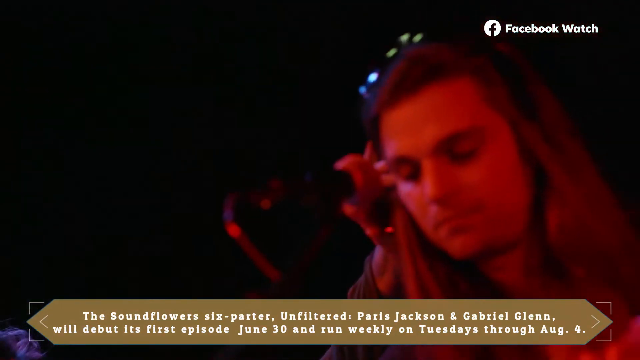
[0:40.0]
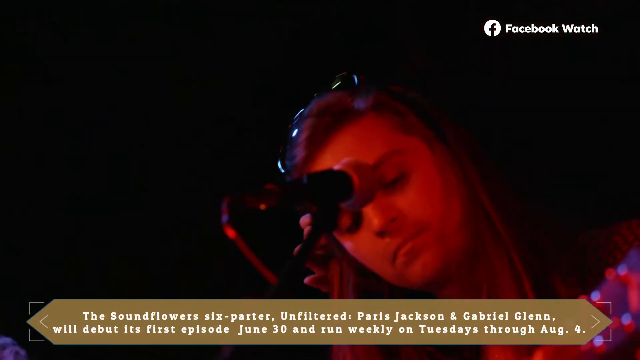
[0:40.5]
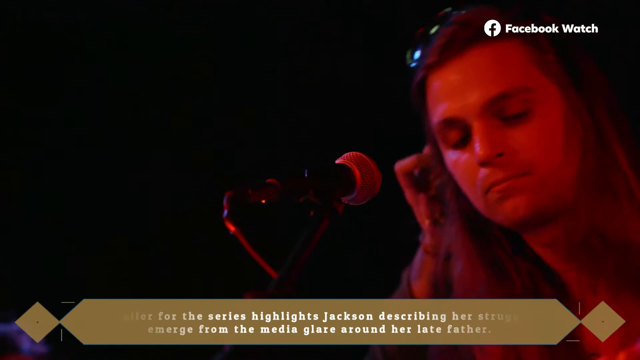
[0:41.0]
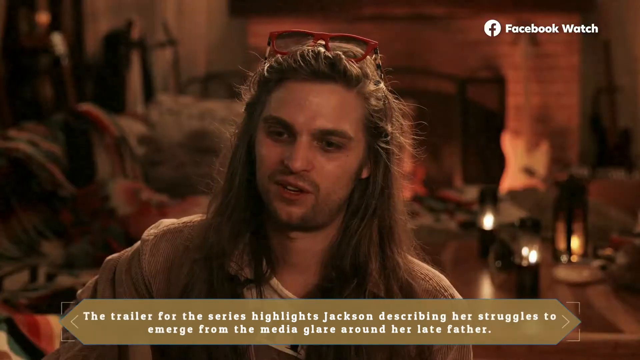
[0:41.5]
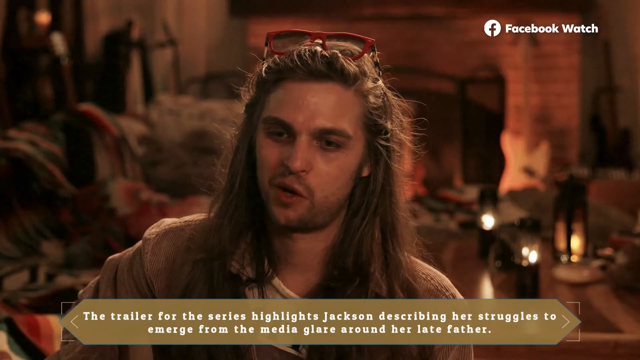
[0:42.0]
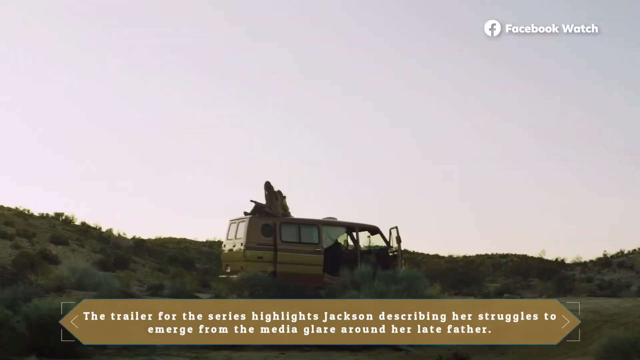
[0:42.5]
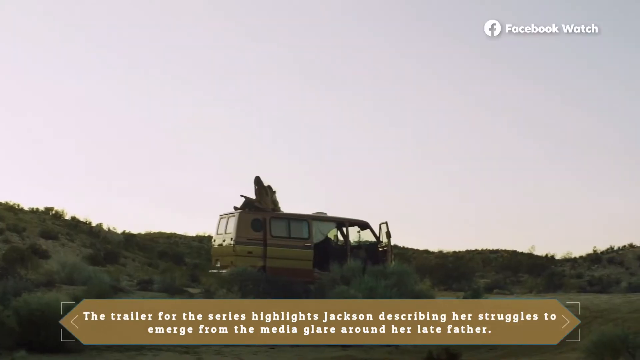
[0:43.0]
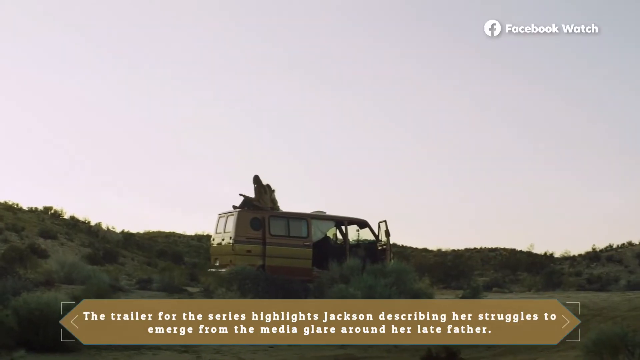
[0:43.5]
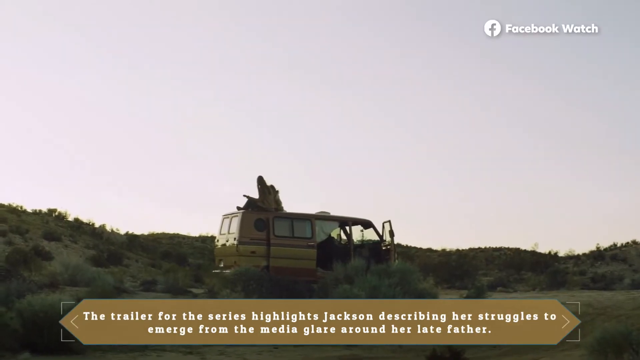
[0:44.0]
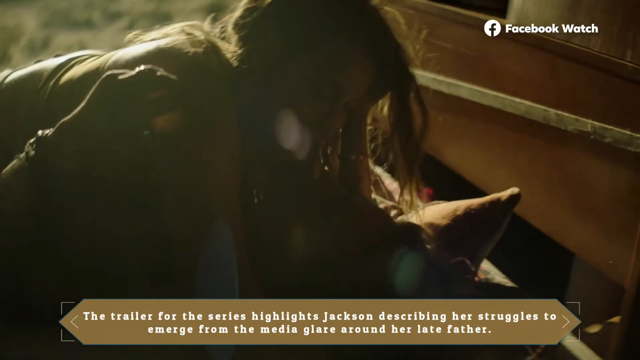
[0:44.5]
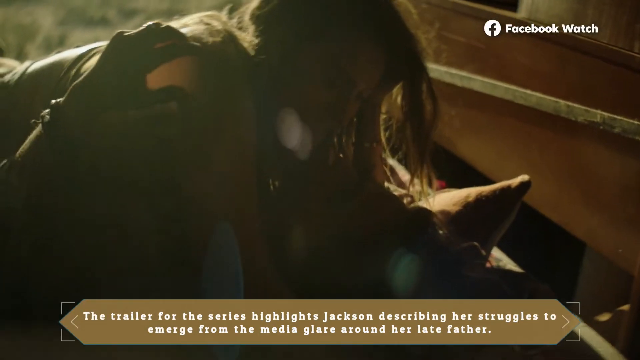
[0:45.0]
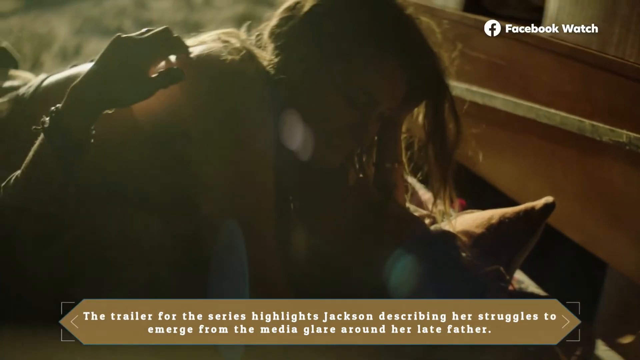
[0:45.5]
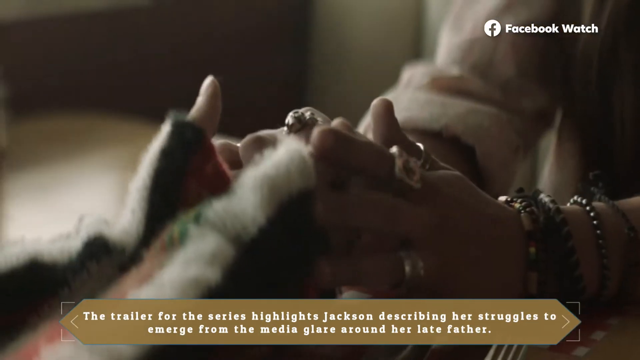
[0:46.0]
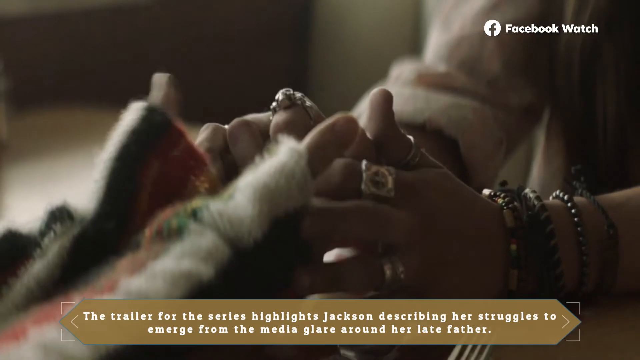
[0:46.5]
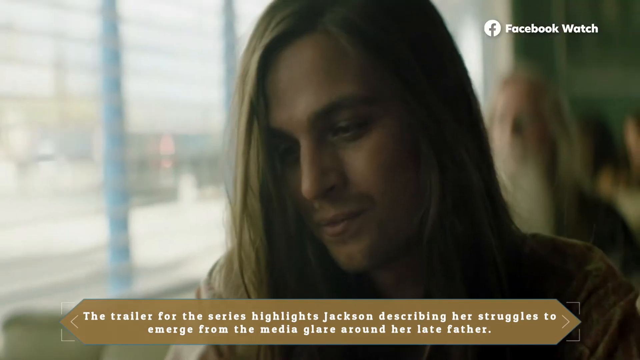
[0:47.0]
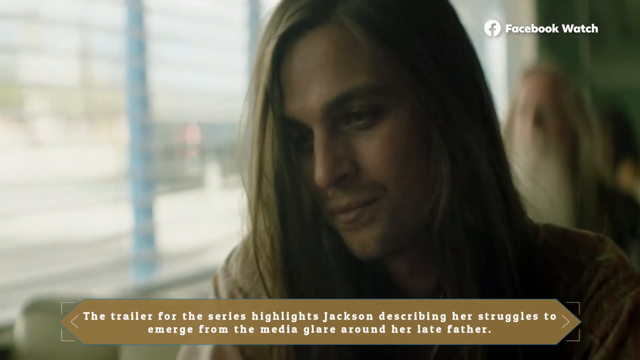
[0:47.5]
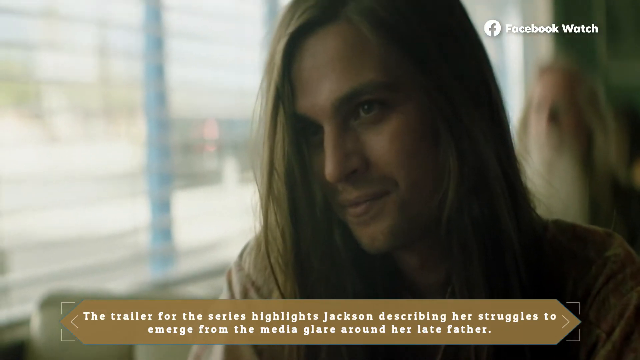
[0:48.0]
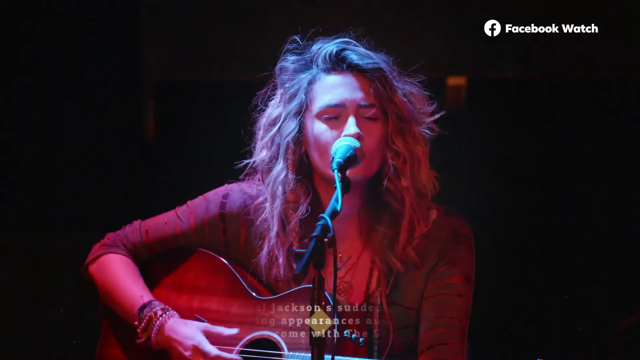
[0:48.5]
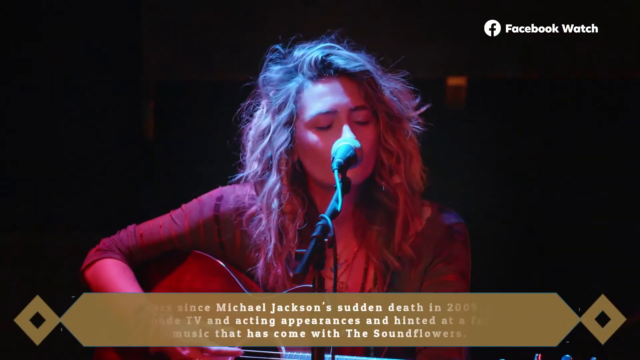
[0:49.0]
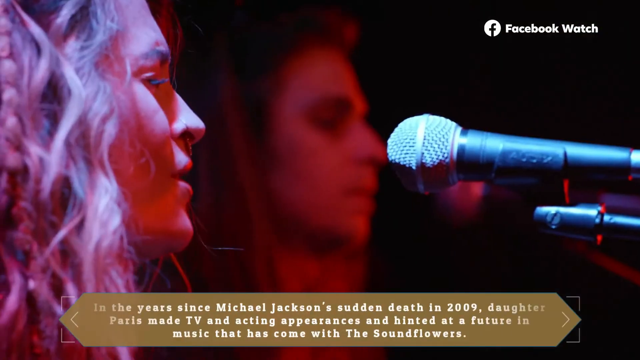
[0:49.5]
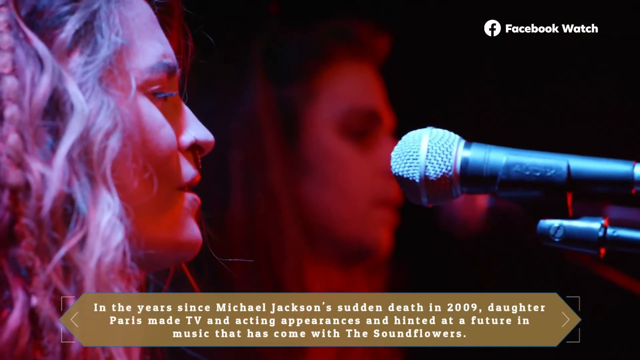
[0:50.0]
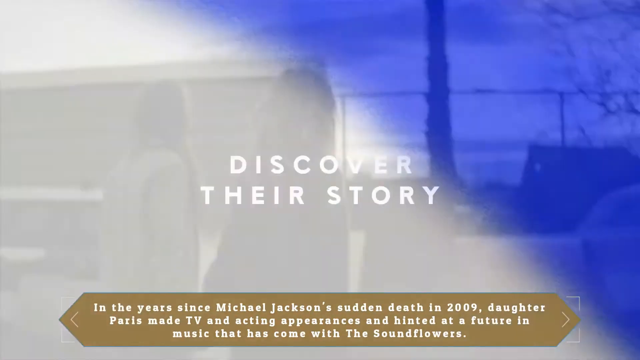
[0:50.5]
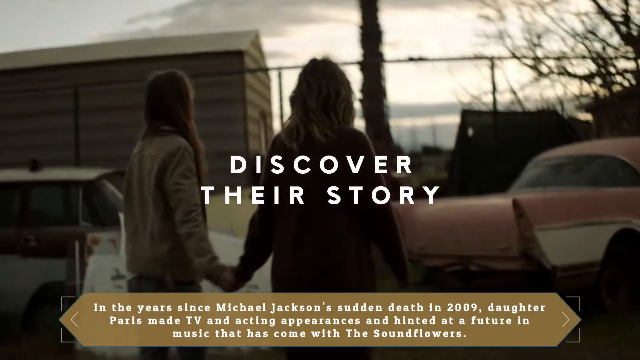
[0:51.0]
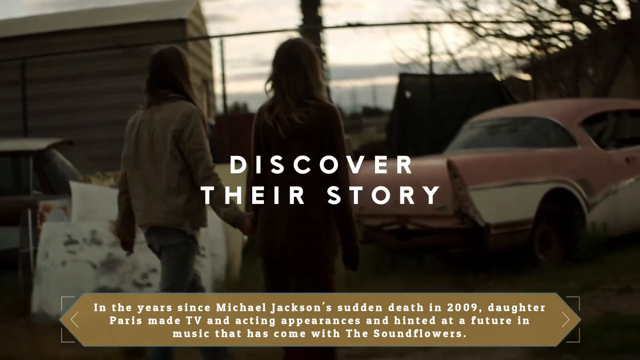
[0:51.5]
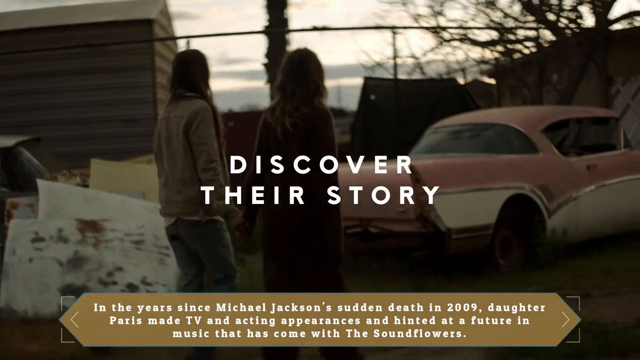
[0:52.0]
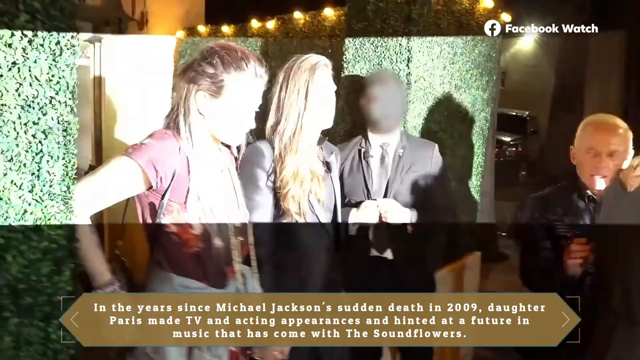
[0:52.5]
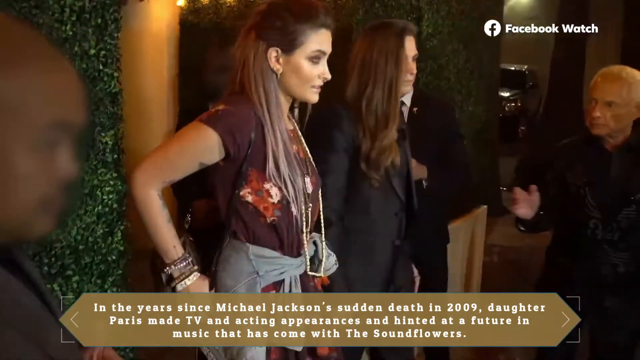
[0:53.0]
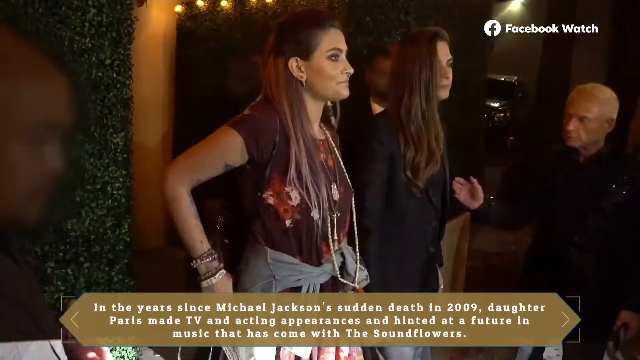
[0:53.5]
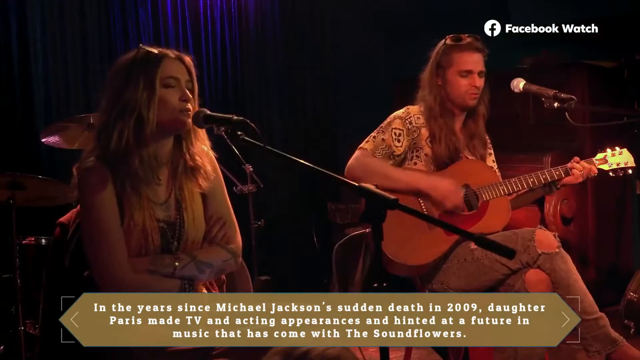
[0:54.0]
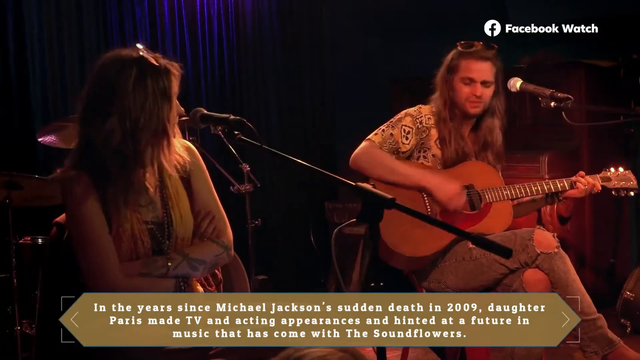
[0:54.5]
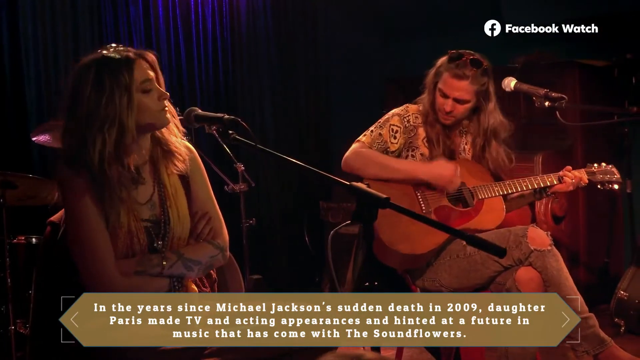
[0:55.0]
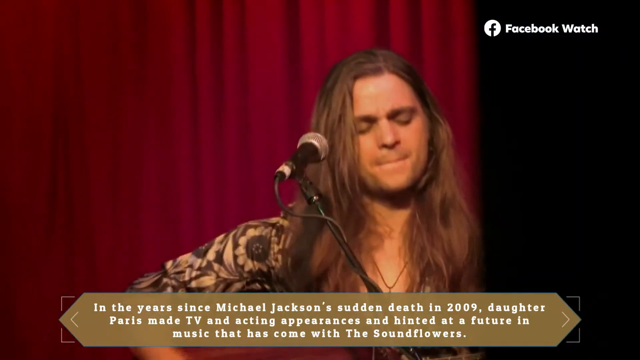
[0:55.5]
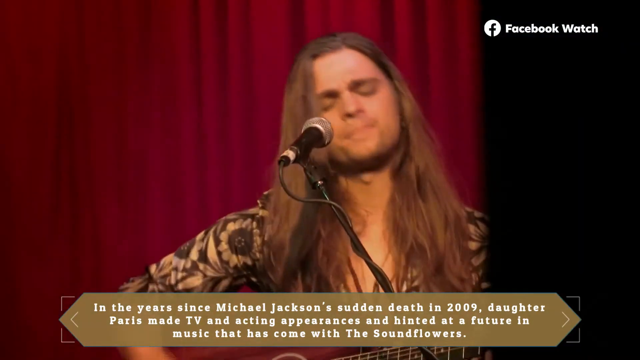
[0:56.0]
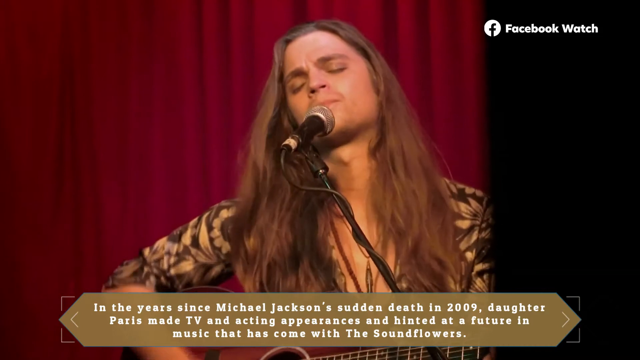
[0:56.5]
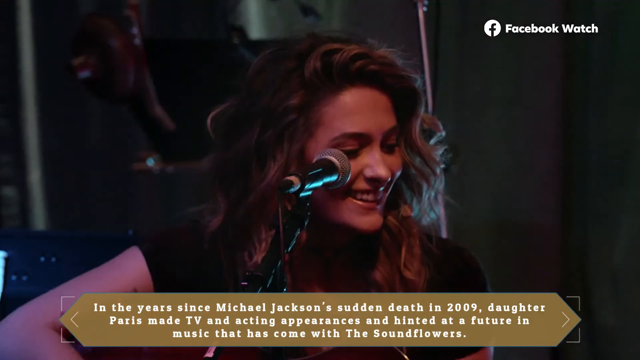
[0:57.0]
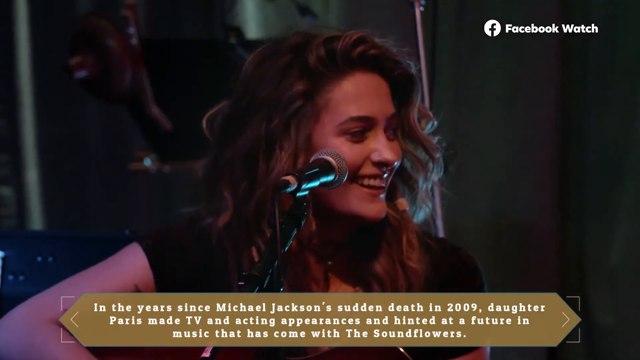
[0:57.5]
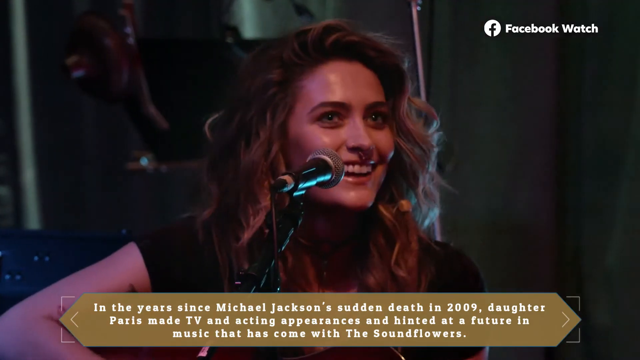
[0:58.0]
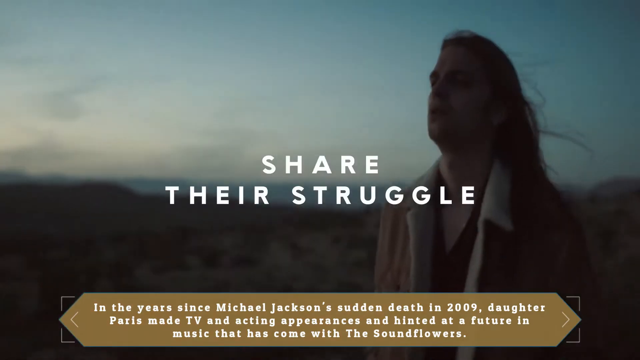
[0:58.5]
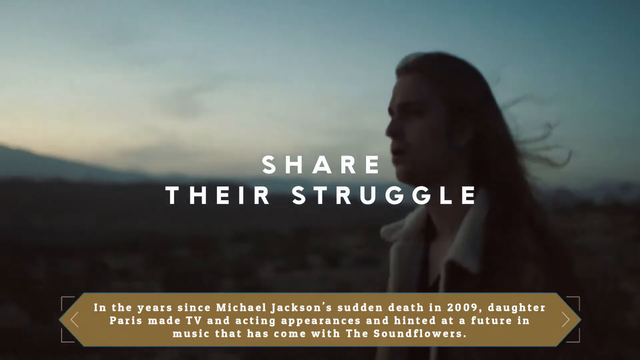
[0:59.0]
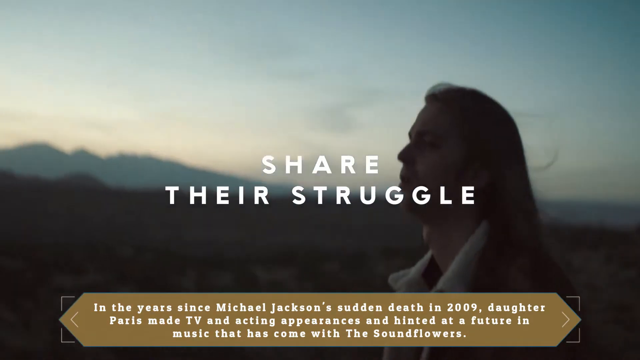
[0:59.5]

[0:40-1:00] Paris Jackson performs on a dark stage with her boyfriend, who is on the right side of the frame, on her left from her perspective. Text refers to the series' "first episode June 30th and run weekly Tuesdays through August 4th." Further text reads "the trailer for the series highlights Jackson describing her struggles to emerge from the media glare around her late father" and "in a year since Michael Jackson's sudden death in 2009, daughter Paris made TV and acting appearances and hinted at a future in music that has come with the Soundflowers."